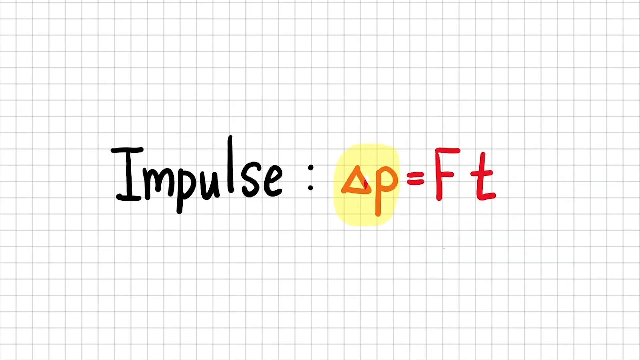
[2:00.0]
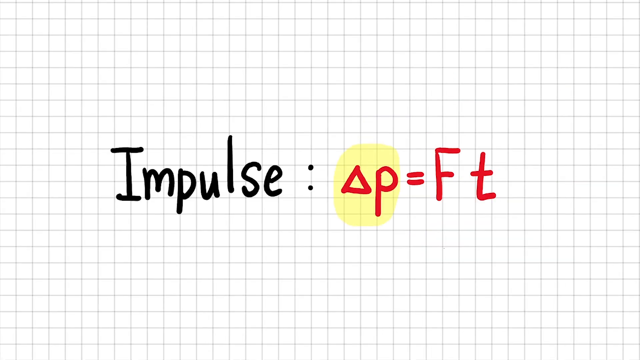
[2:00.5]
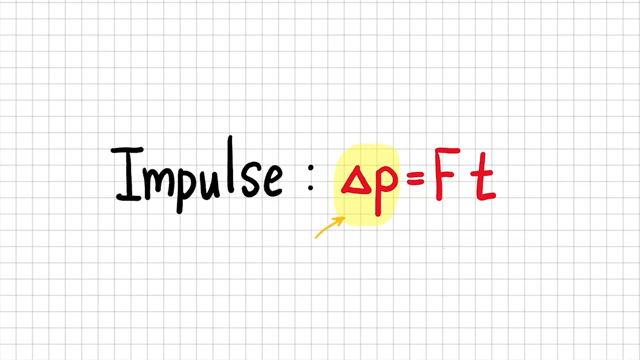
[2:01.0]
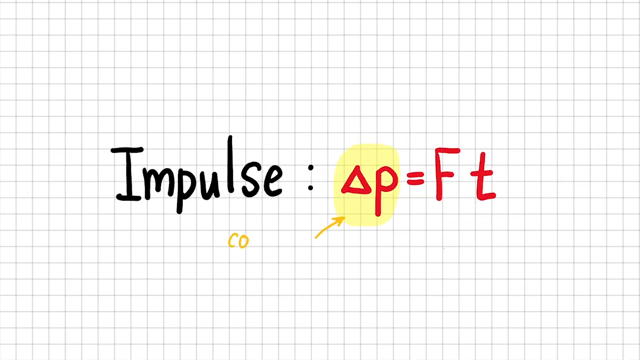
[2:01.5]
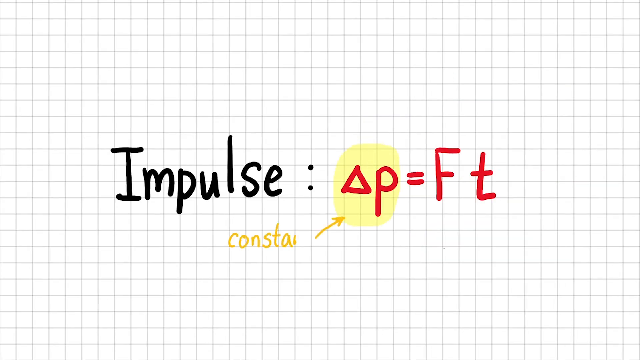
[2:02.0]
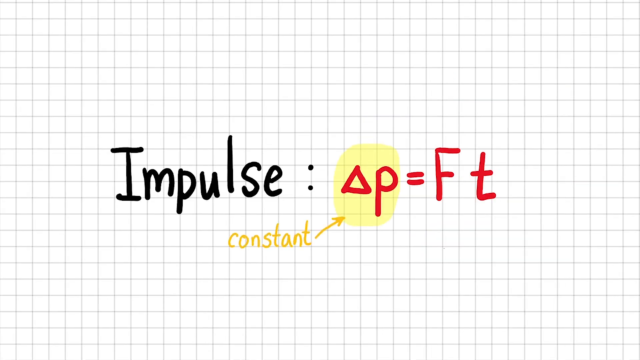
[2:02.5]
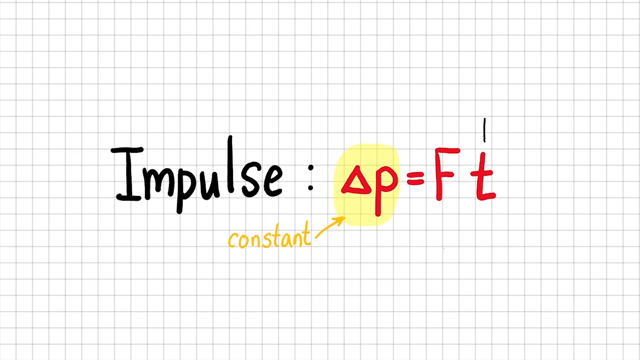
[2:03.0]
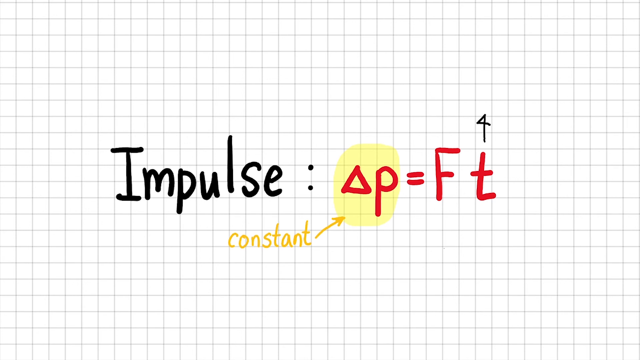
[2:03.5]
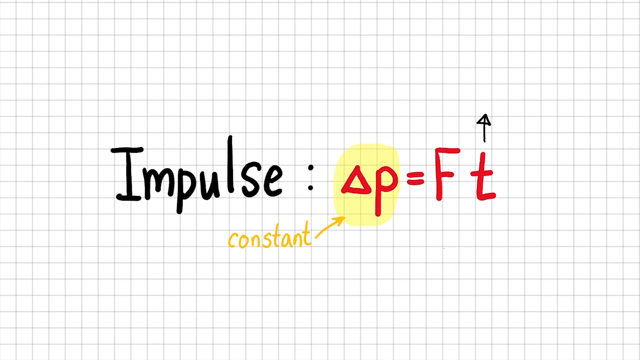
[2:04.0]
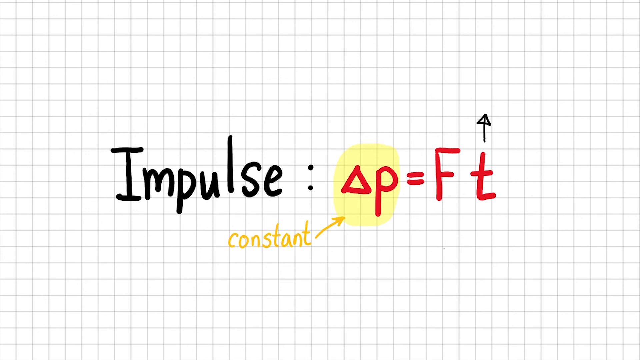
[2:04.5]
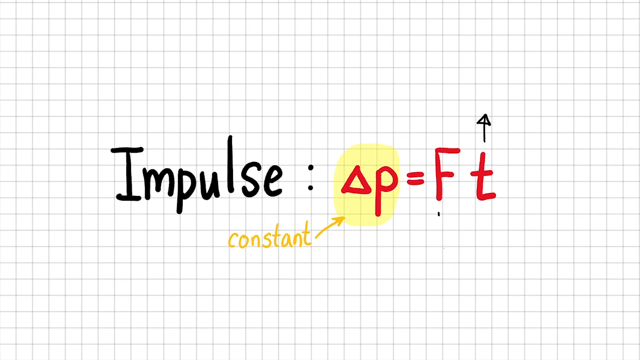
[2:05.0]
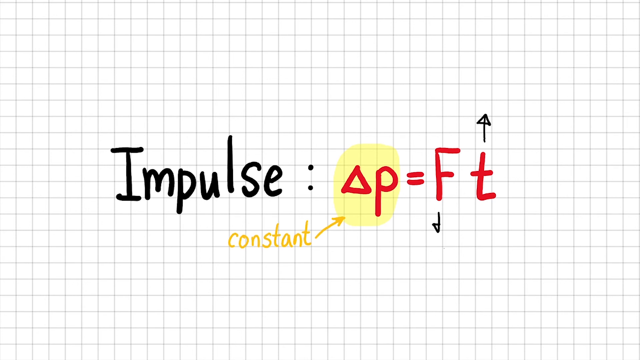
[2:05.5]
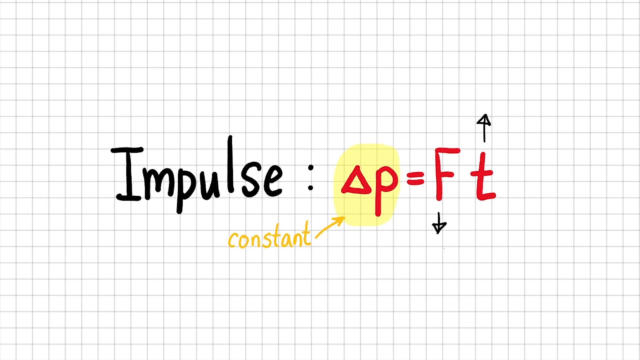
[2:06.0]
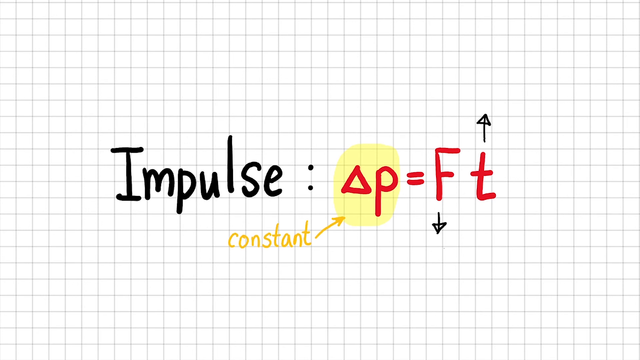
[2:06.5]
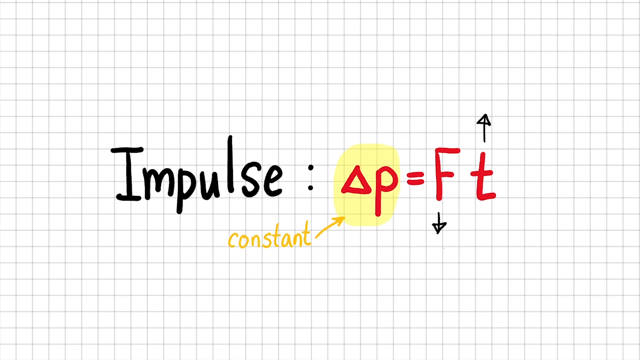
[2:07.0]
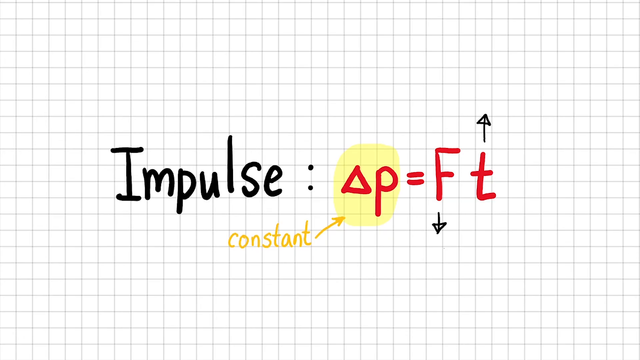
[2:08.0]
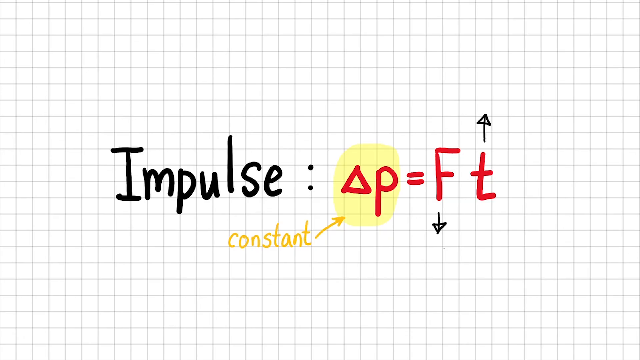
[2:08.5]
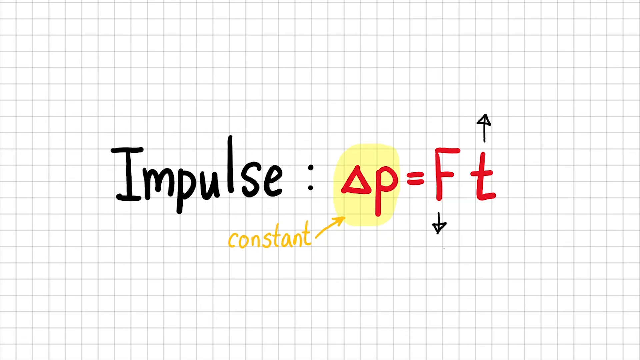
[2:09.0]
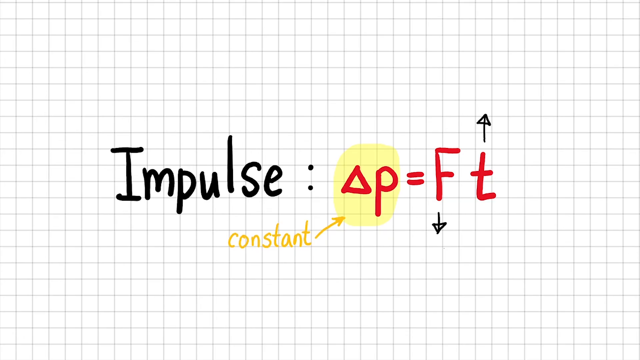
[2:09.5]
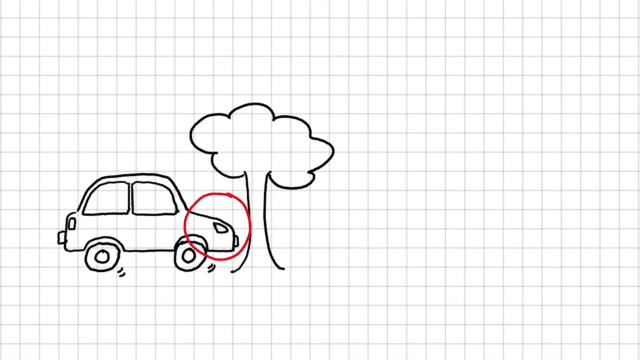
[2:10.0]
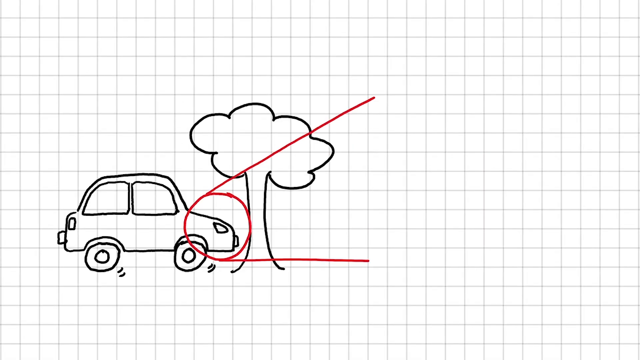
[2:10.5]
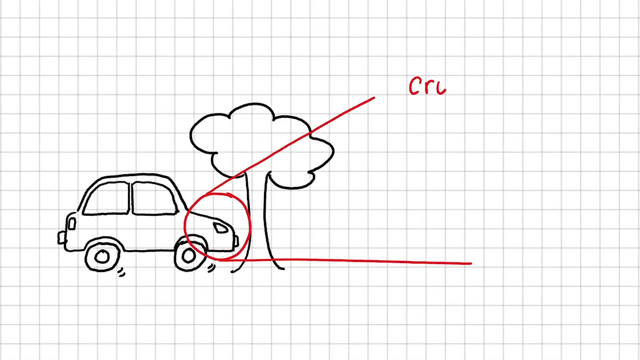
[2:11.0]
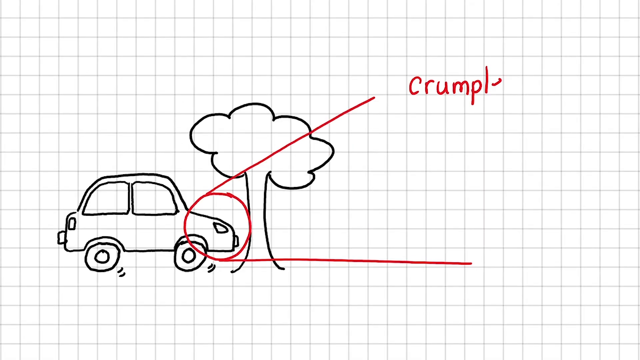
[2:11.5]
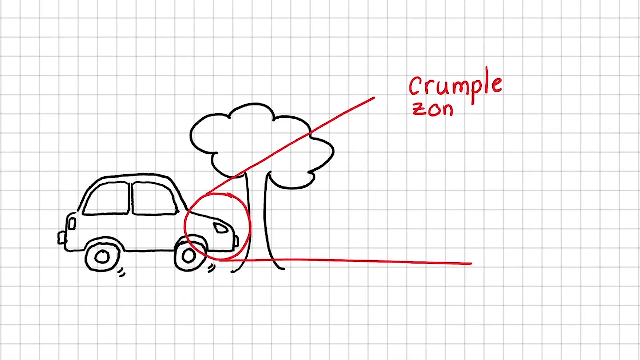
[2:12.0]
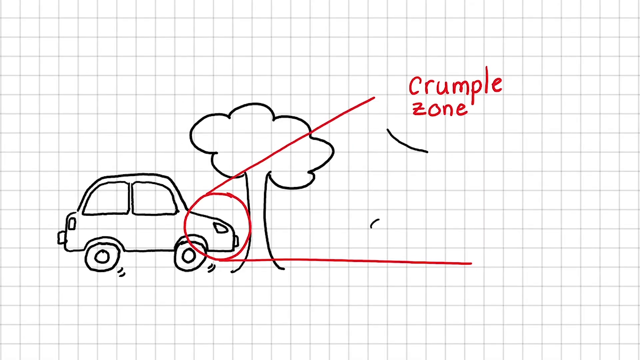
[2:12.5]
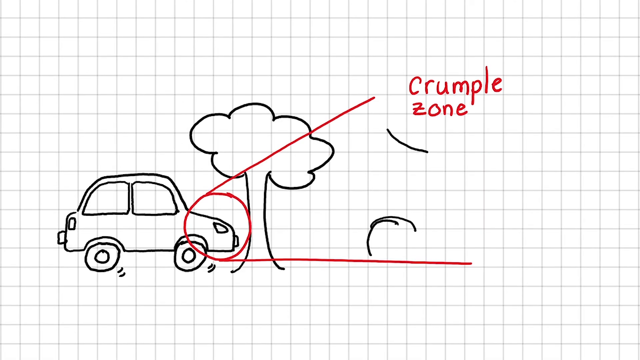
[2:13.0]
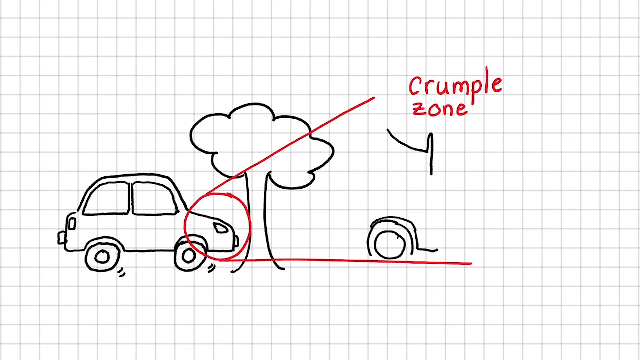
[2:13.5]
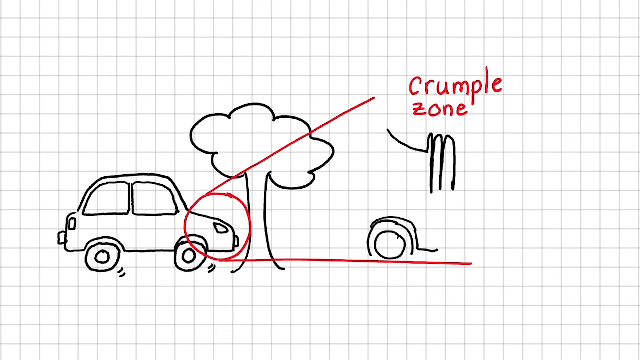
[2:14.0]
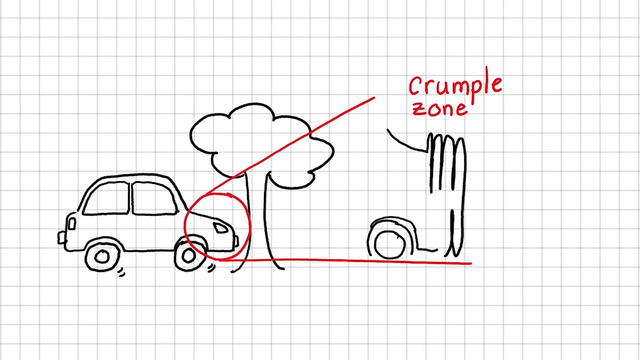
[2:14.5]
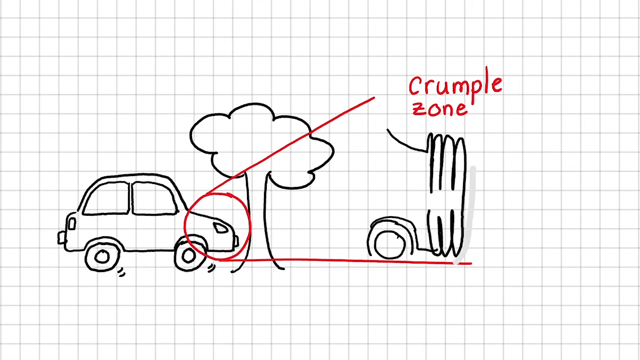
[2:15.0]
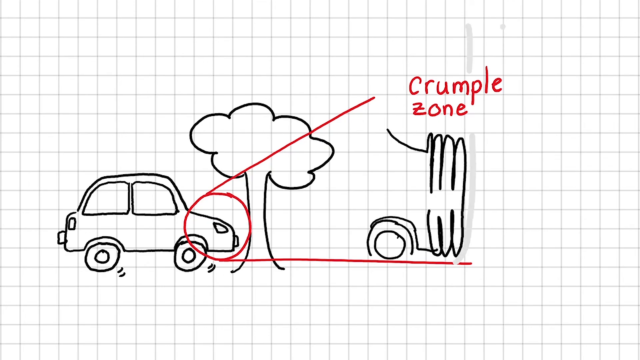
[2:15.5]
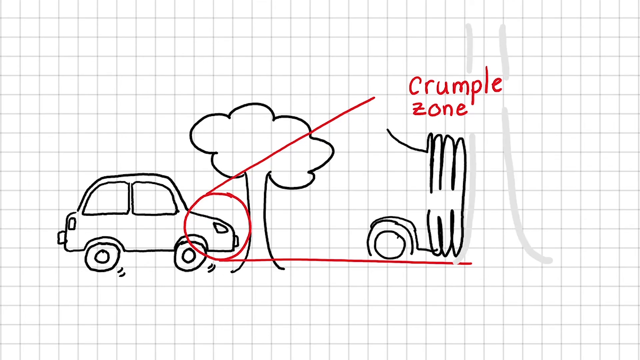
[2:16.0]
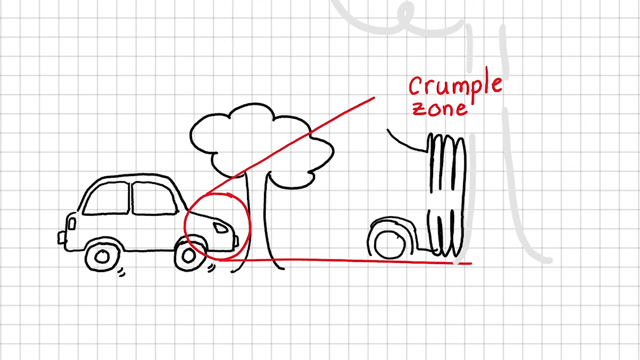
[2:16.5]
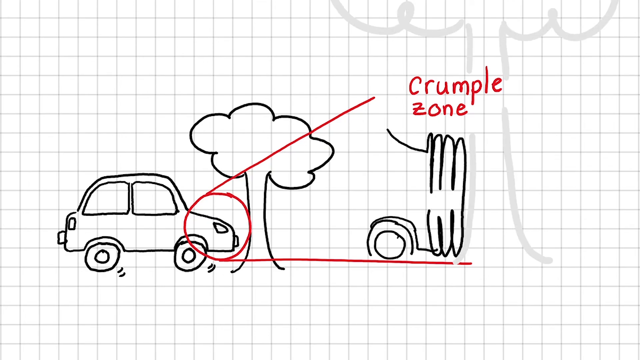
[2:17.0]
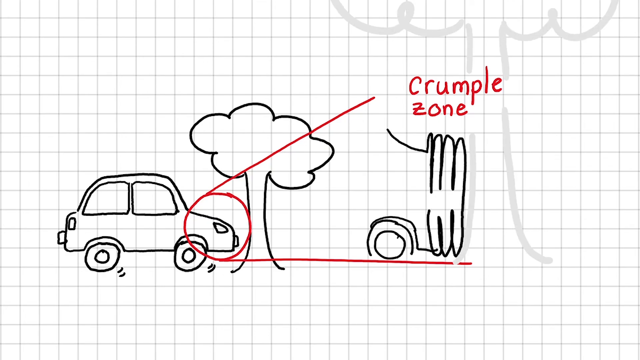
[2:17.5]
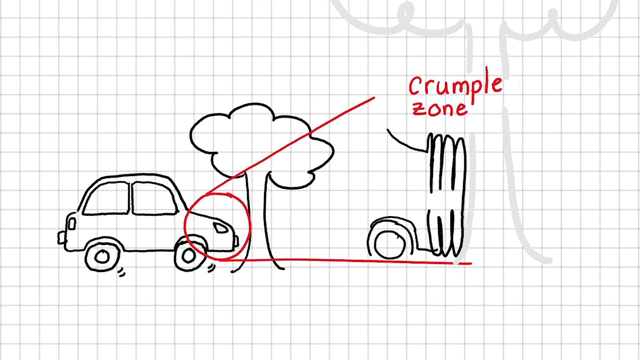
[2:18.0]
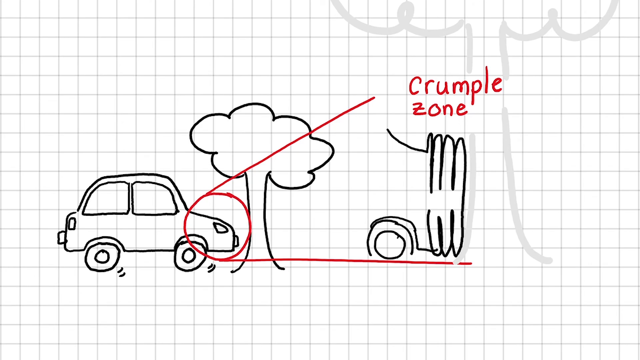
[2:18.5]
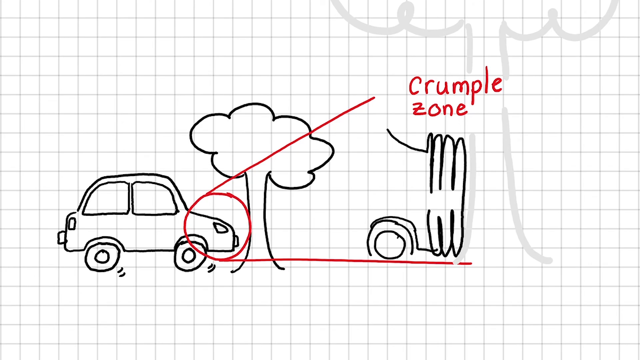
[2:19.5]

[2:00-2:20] On a grid-patterned background, the impulse formula is written, with "impulse" in black followed by "Delta p= F t" in red. Delta P is highlighted in yellow, an arrow is drawn below it pointing toward Delta P, and "constant" is written below the arrow in yellow. A small black upward-facing arrow is drawn above t in the formula, and a small black downward-facing arrow is drawn below F. On the next slide, also with the grid pattern background, an outline sketch is drawn: a side view of a car with a canopy tree standing in front of it. A red circle is drawn on the front portion of the car, with two lines drawn above and below it, and "crumple zone" is written on the right near the top line. The front portion of the car alone is then drawn as if crashed, with a tree in light grey drawn in front of it.